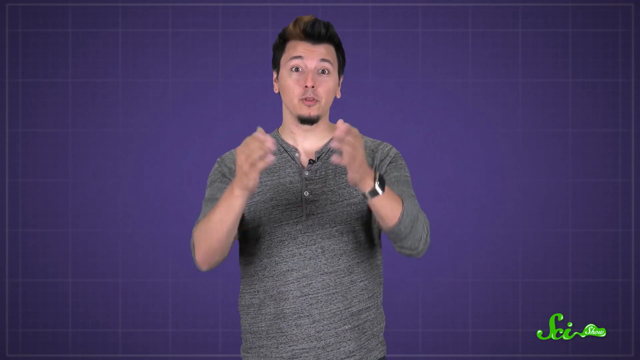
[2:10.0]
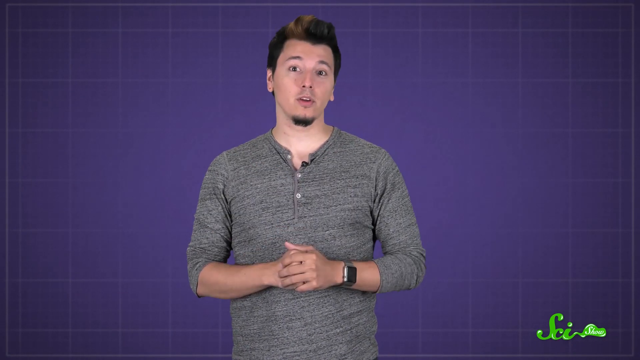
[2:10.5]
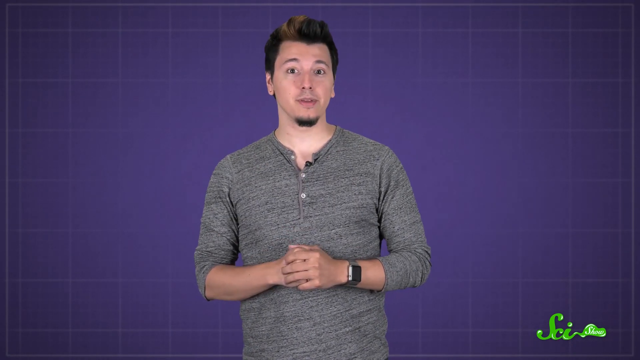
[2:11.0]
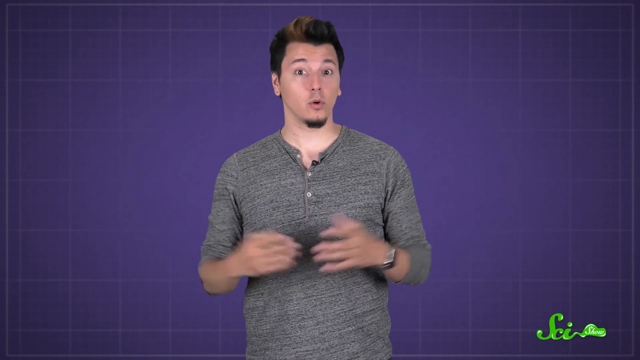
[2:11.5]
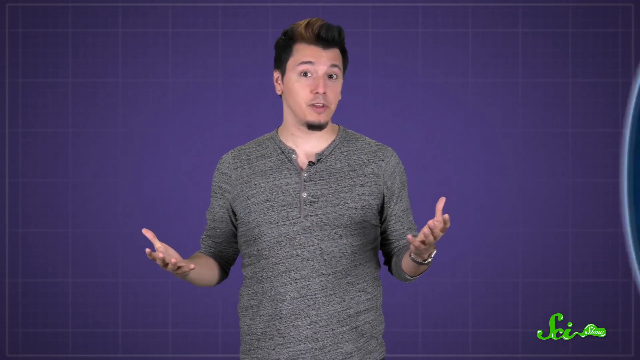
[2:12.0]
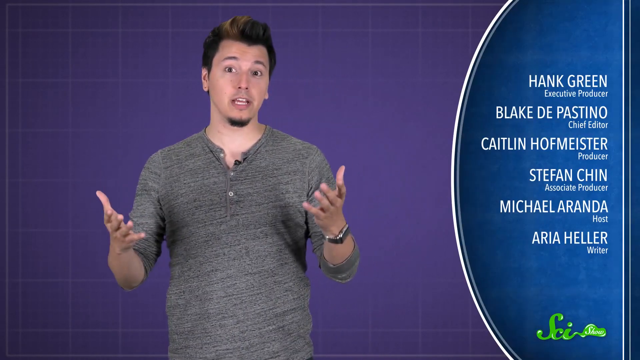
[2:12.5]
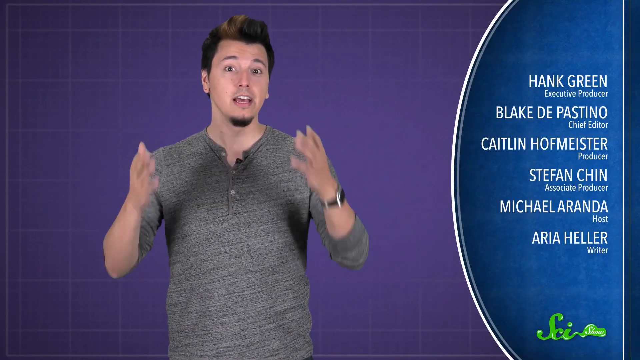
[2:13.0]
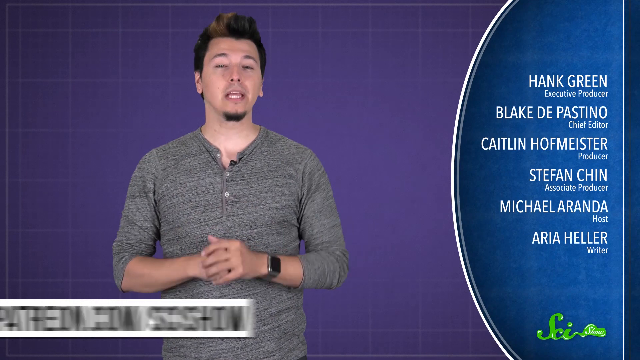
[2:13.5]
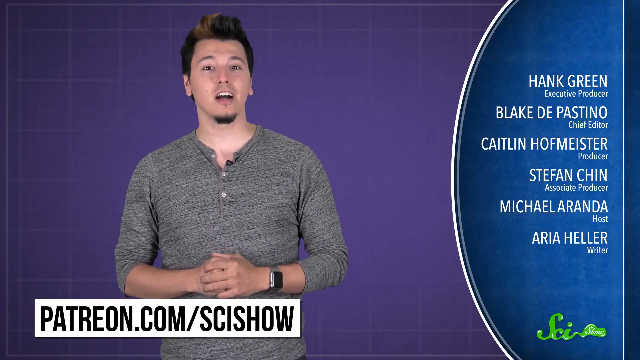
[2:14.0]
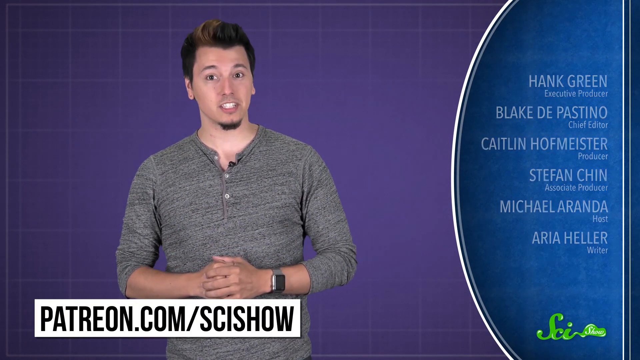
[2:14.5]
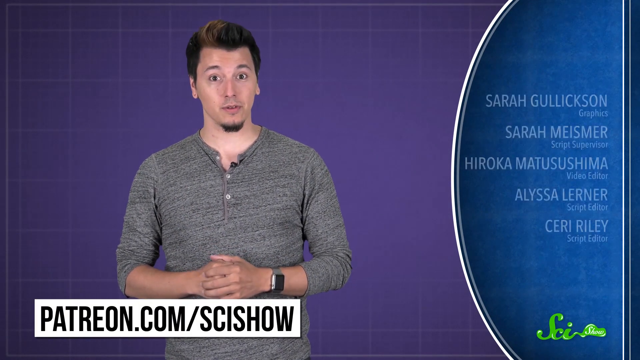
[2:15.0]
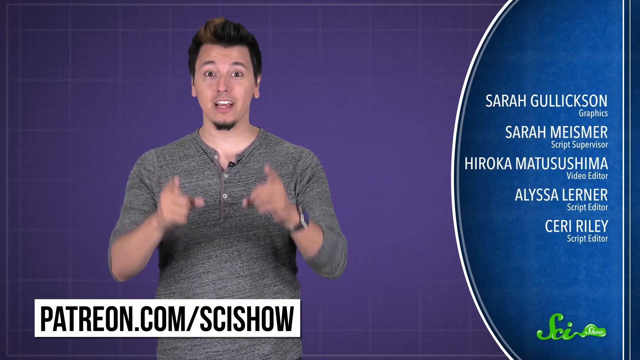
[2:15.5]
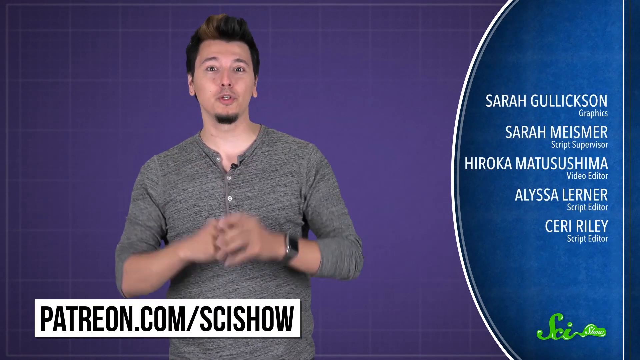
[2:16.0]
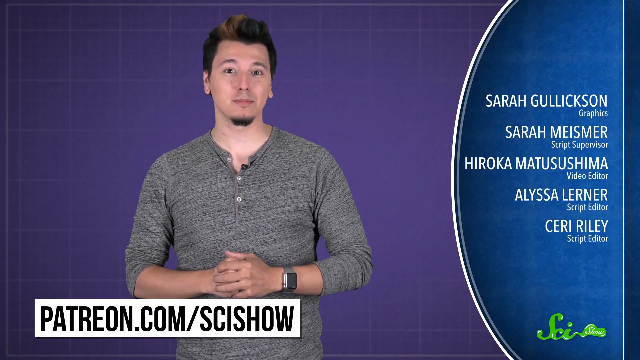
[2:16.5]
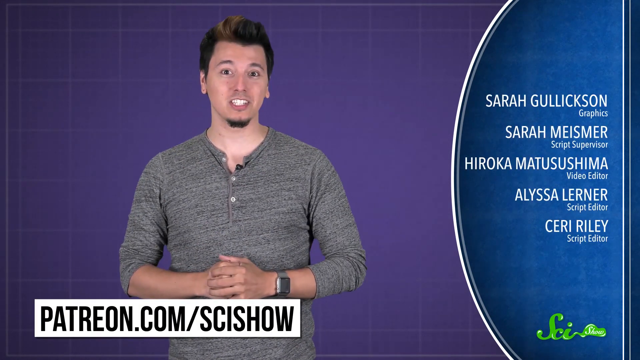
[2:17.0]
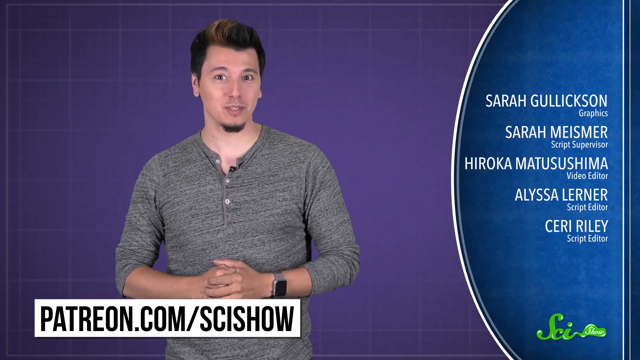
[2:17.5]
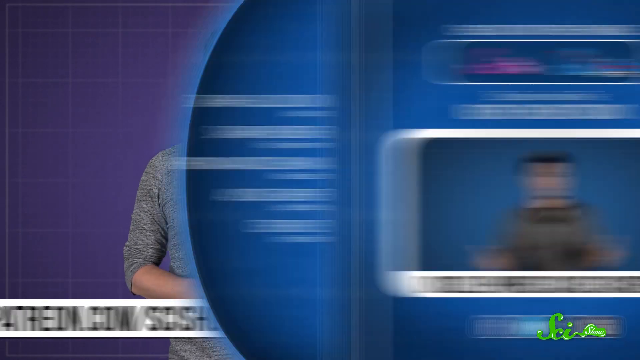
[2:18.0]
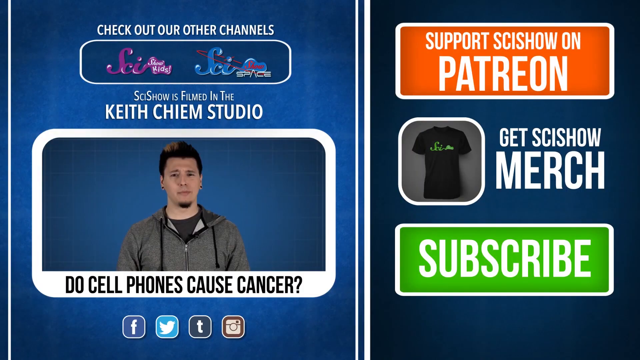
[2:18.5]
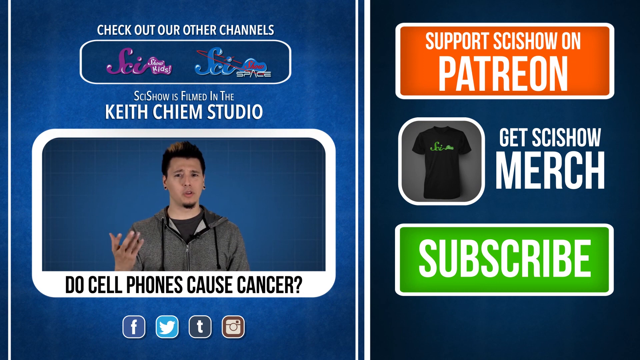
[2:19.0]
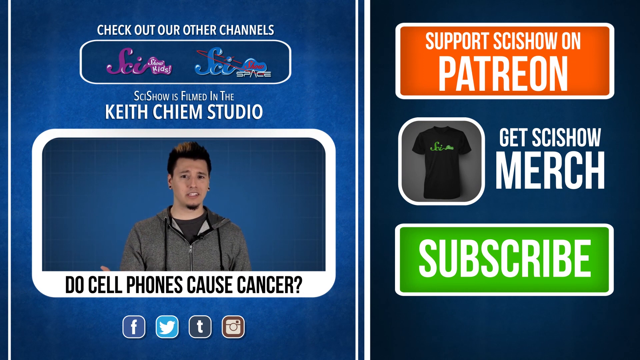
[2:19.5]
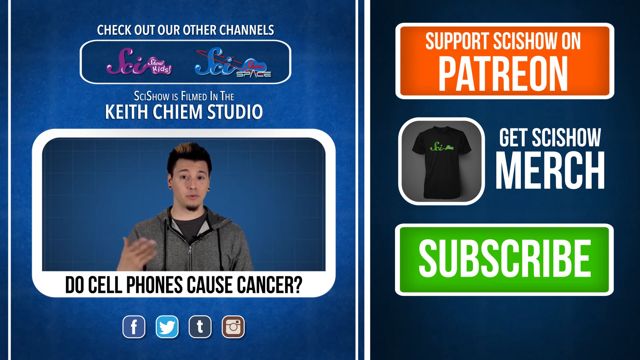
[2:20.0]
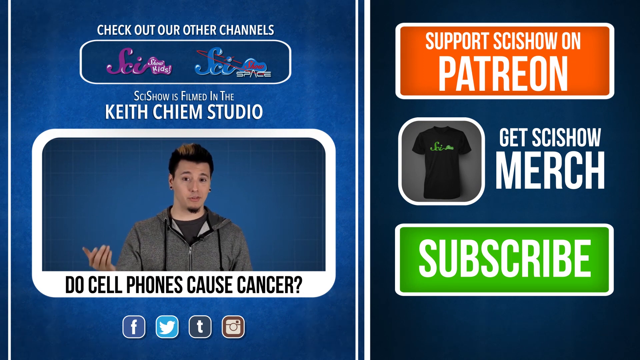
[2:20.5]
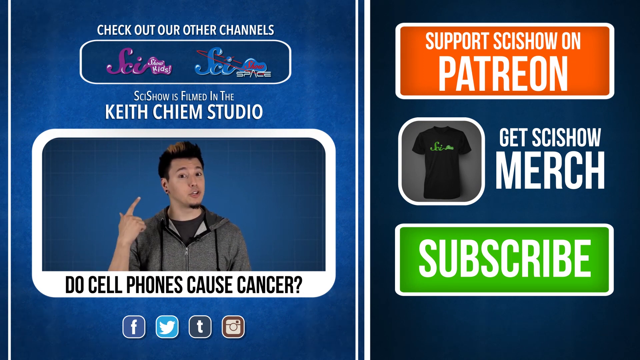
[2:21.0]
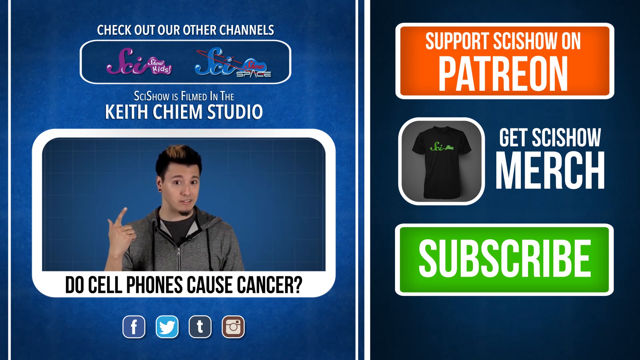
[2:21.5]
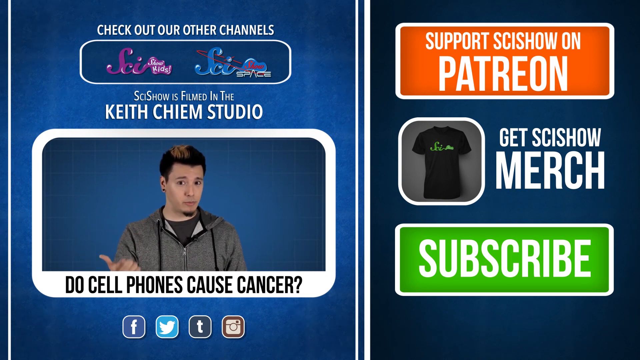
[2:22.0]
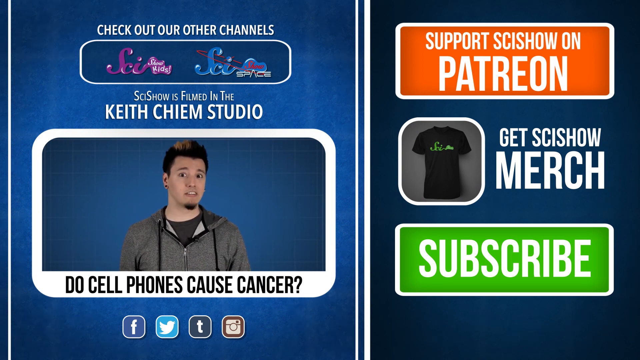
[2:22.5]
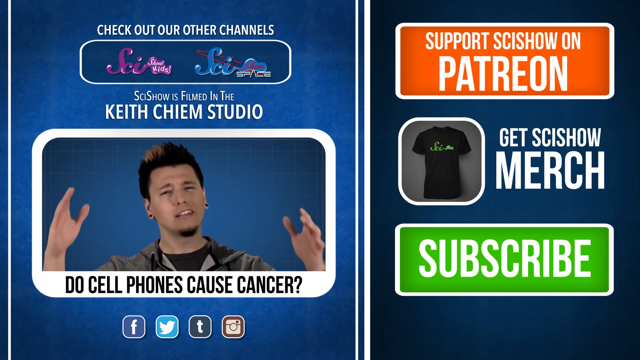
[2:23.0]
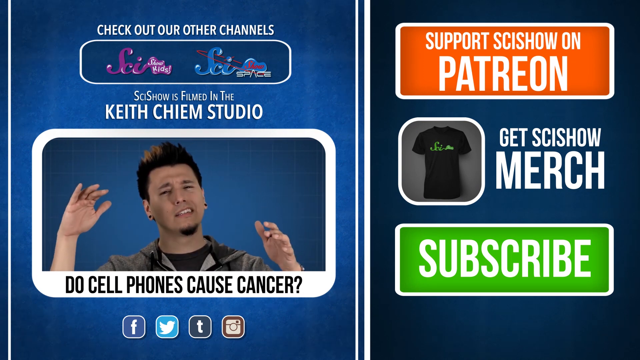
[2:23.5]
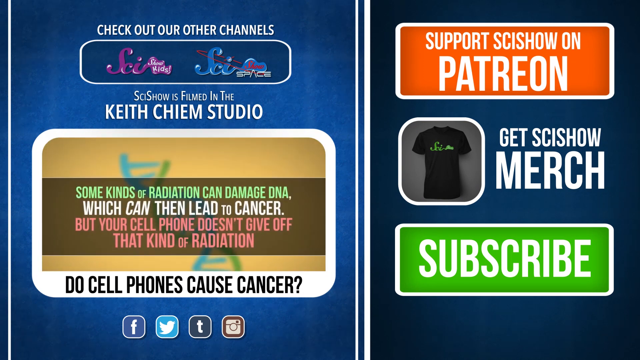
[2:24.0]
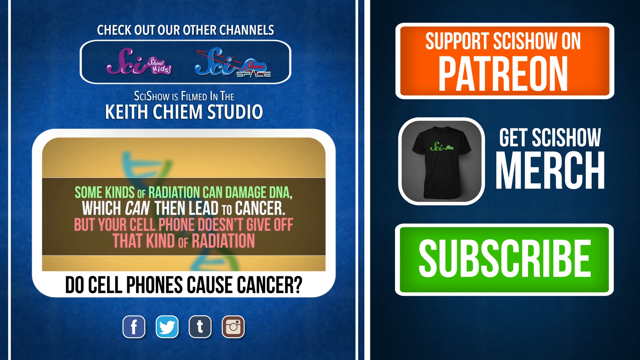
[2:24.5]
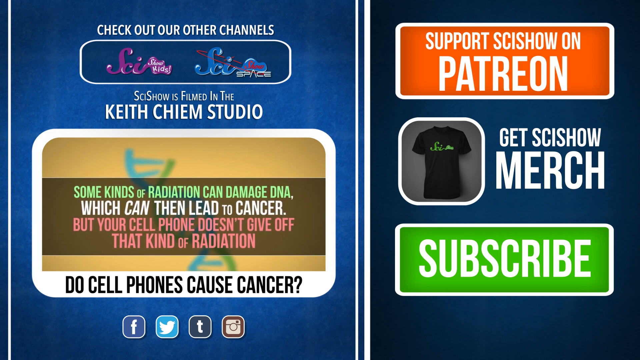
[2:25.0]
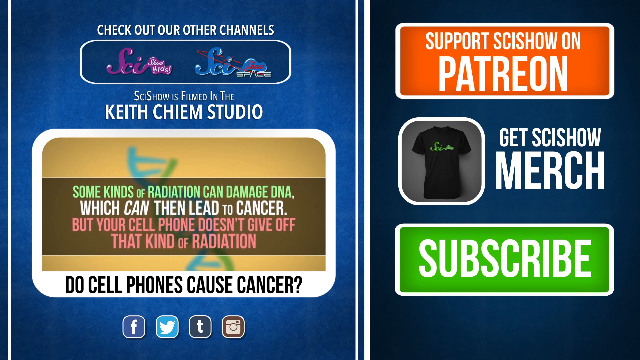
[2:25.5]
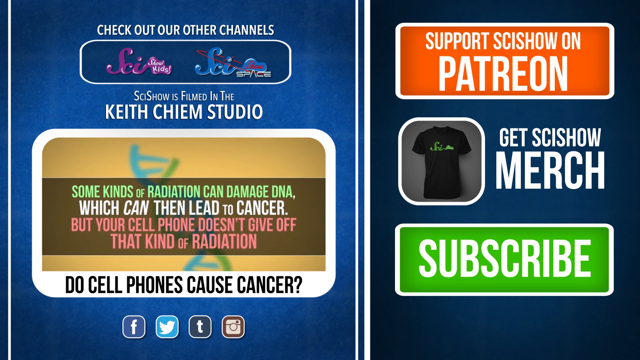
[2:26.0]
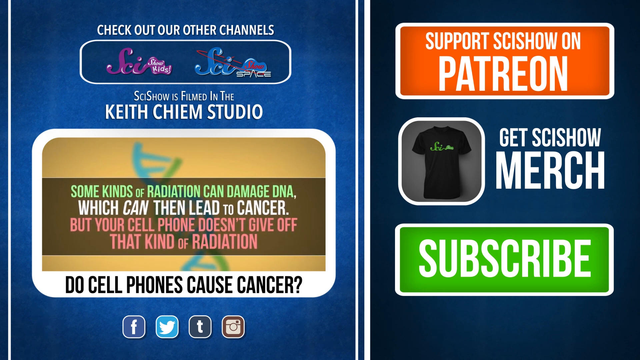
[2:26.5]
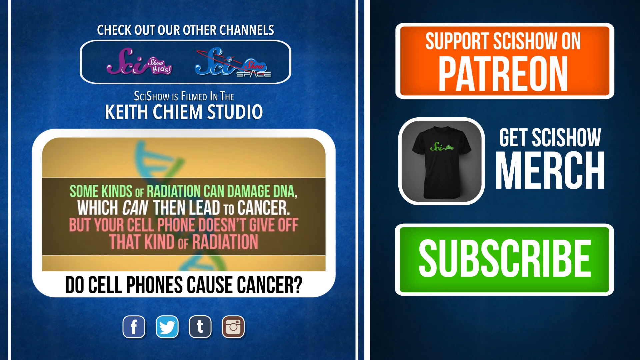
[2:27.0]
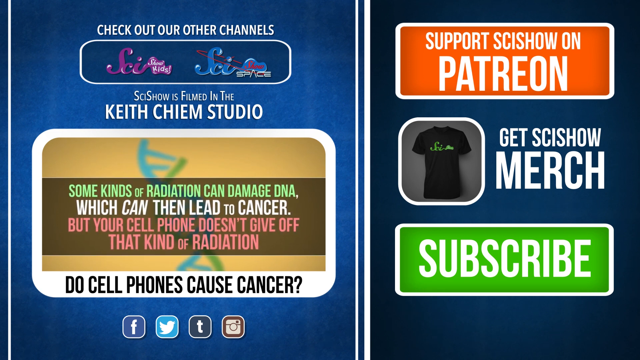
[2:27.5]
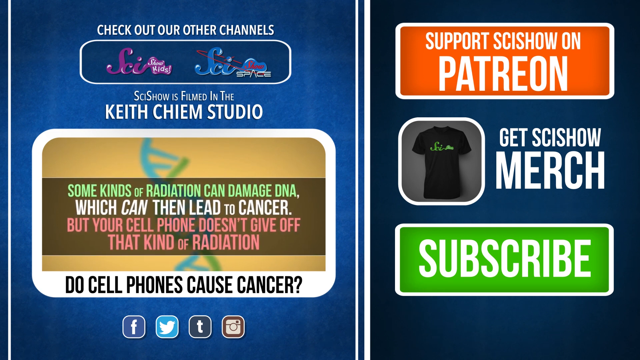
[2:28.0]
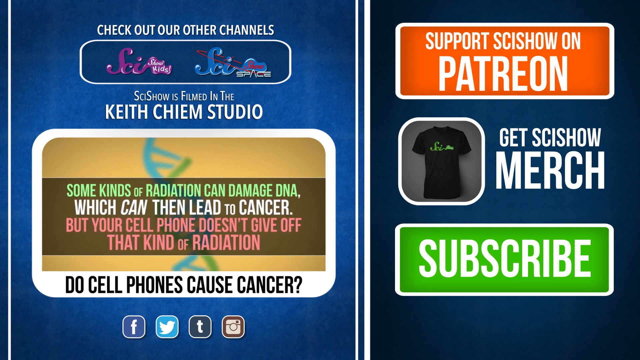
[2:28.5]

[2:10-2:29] The young man in the gray shirt looks directly into the camera, his hands in front of his chest gesticulating together as he speaks, and then the video ends.